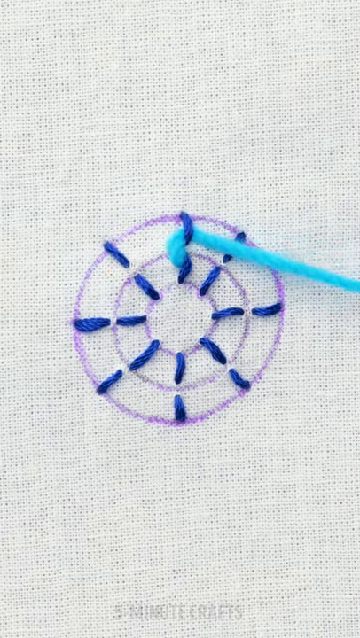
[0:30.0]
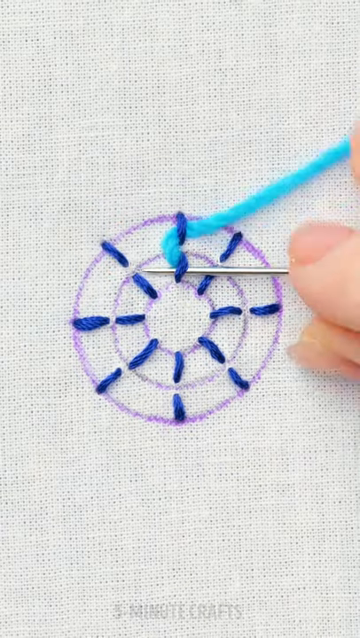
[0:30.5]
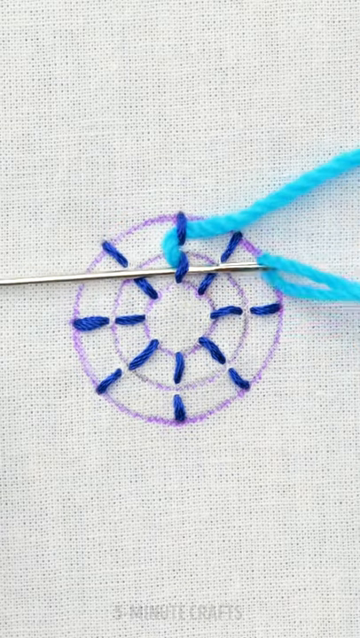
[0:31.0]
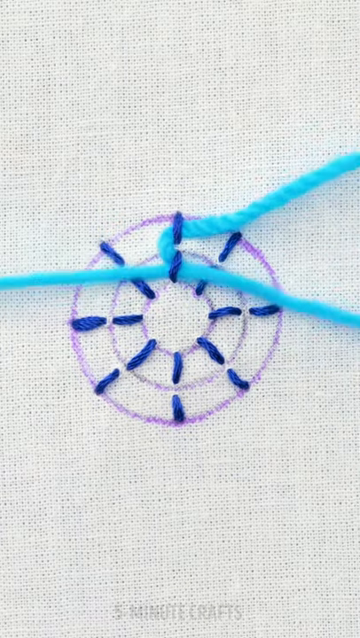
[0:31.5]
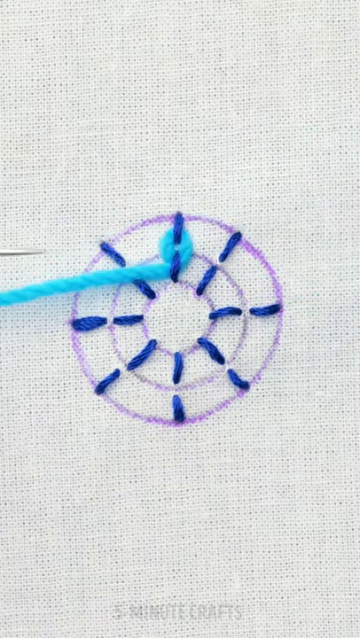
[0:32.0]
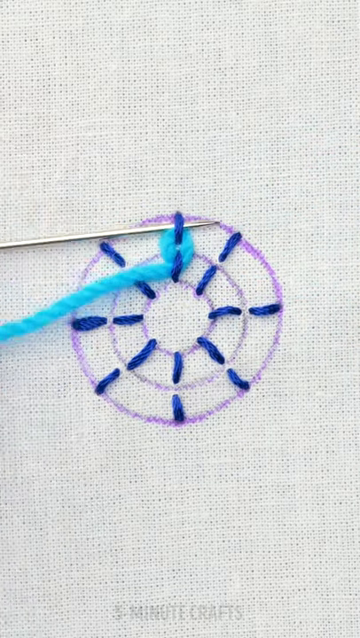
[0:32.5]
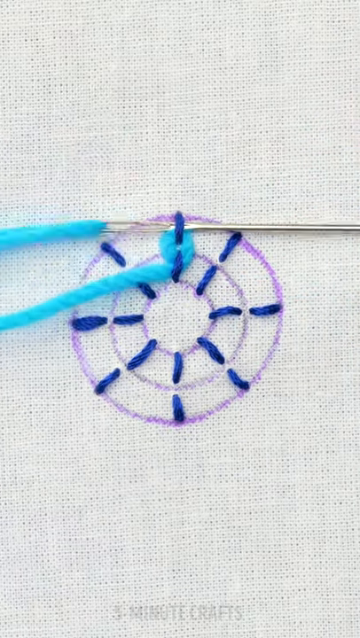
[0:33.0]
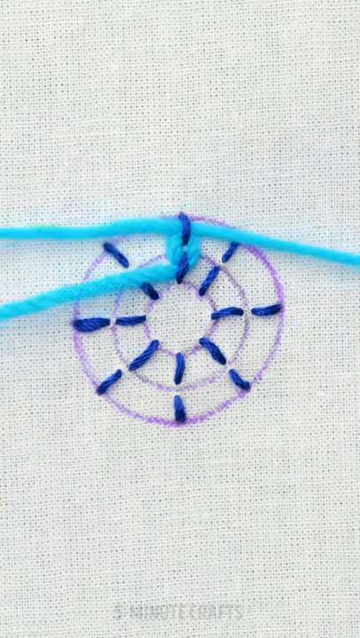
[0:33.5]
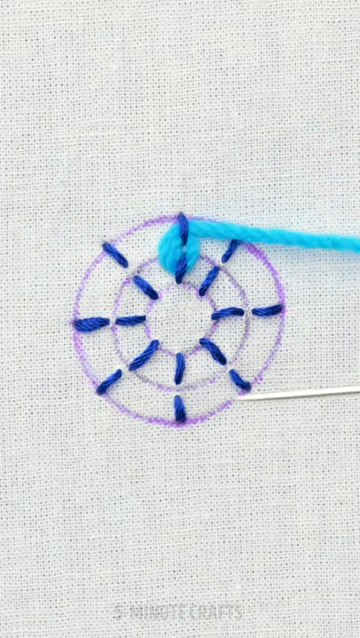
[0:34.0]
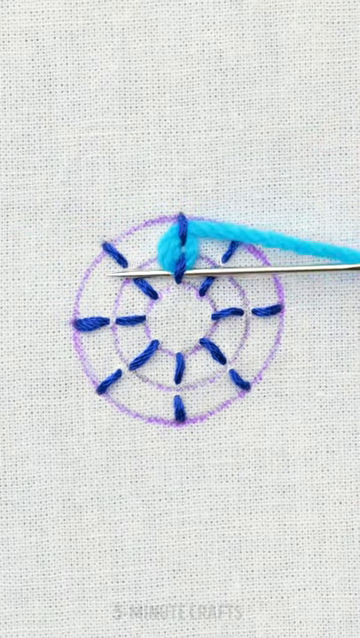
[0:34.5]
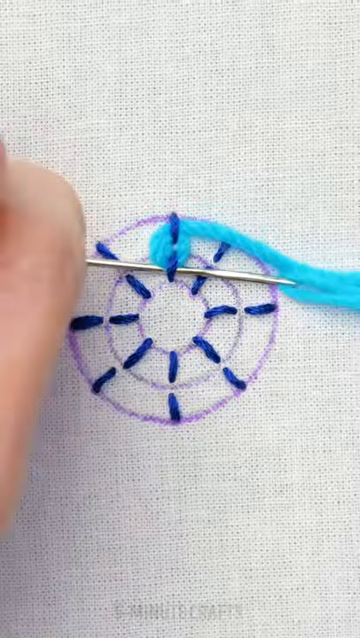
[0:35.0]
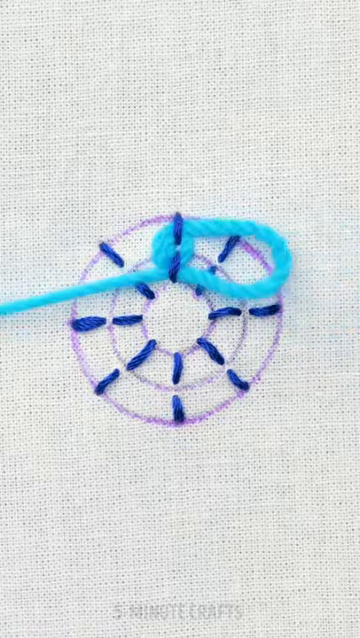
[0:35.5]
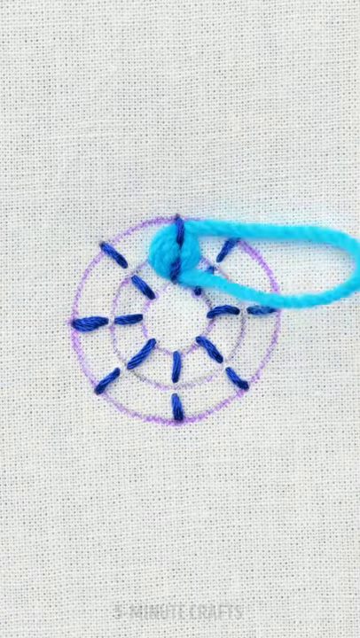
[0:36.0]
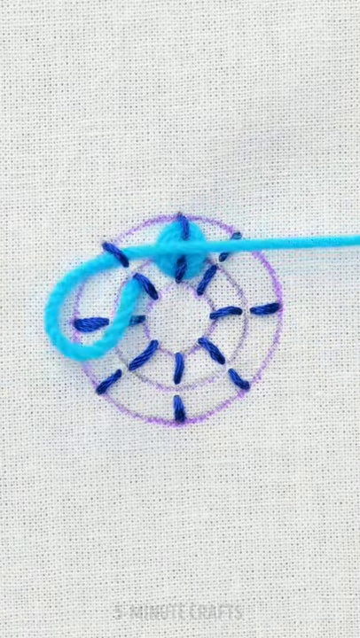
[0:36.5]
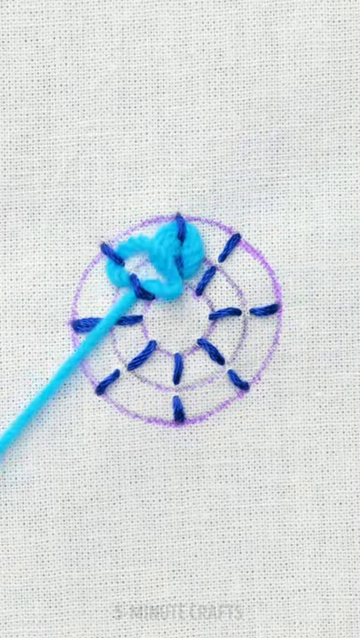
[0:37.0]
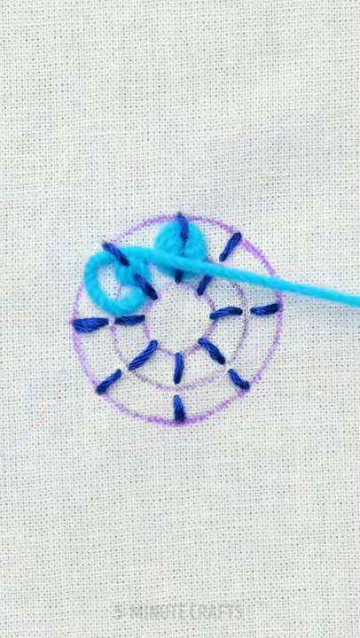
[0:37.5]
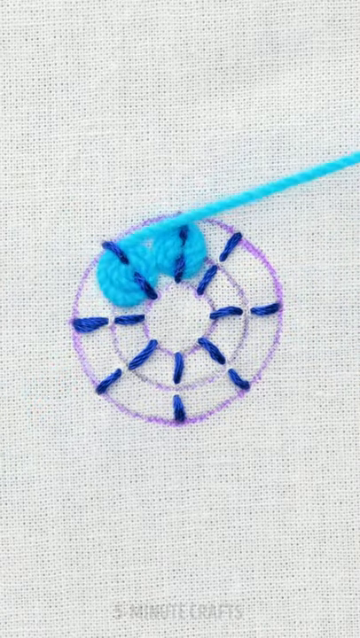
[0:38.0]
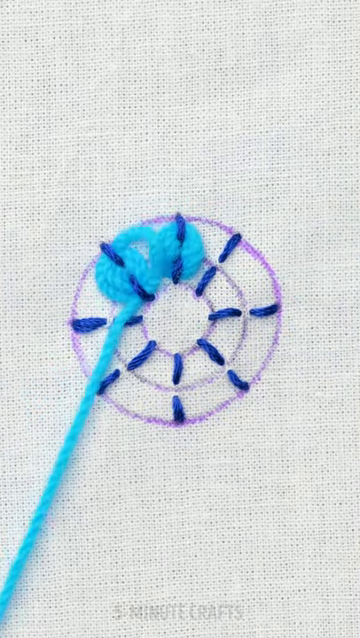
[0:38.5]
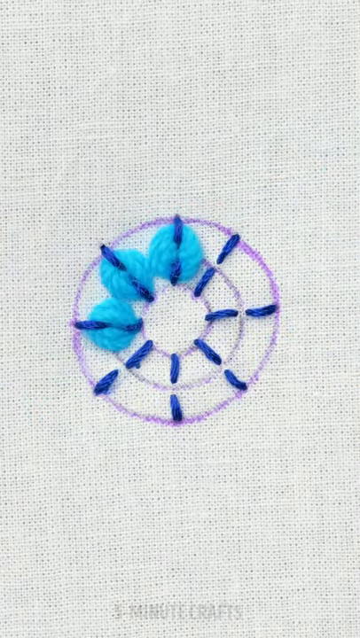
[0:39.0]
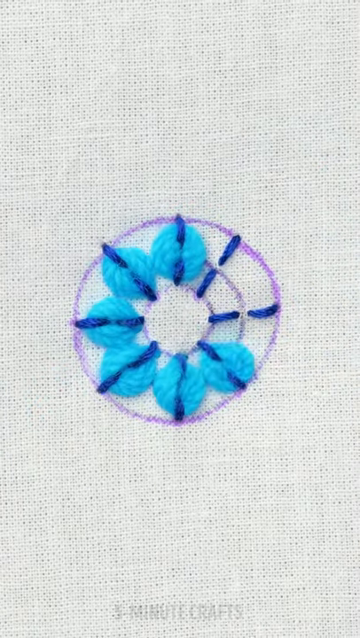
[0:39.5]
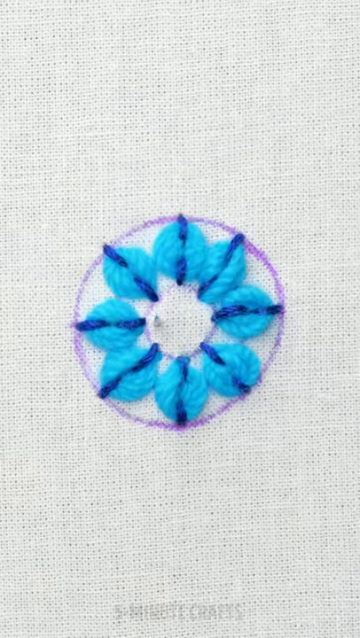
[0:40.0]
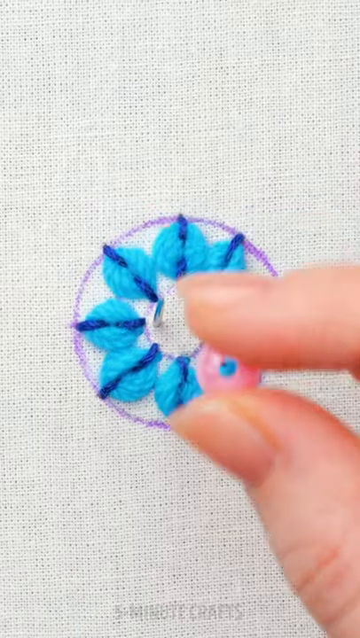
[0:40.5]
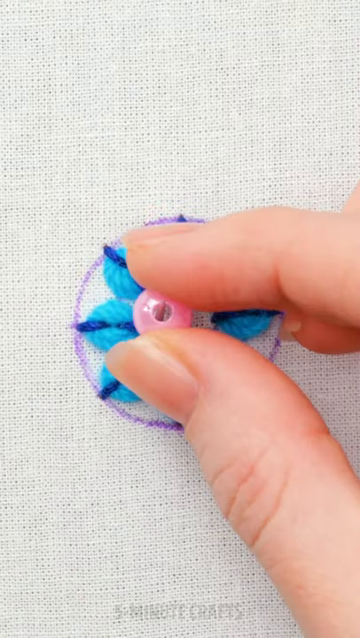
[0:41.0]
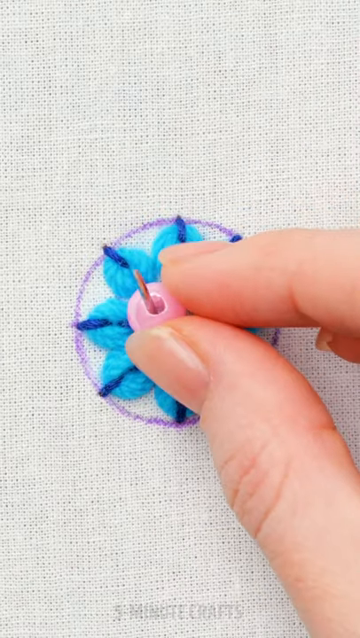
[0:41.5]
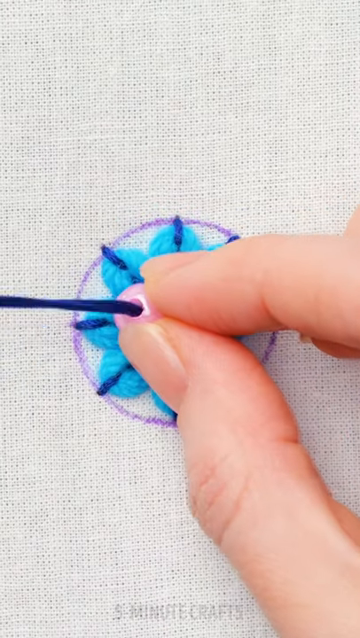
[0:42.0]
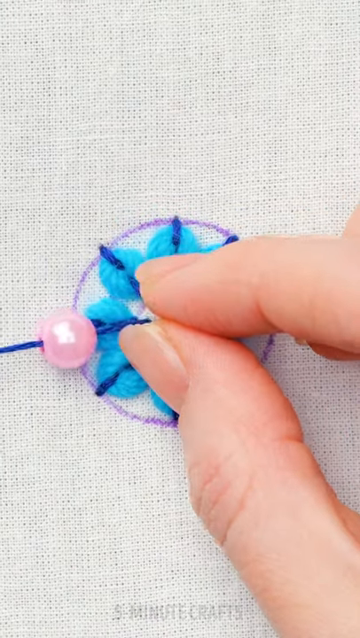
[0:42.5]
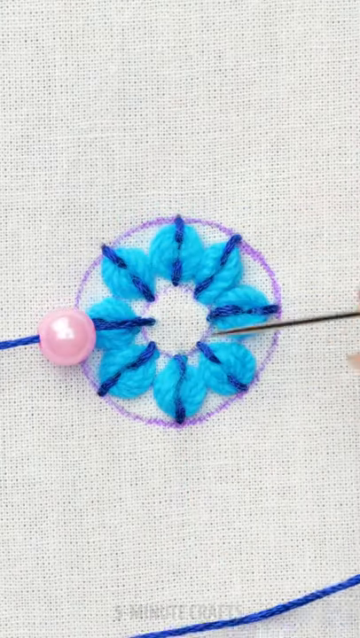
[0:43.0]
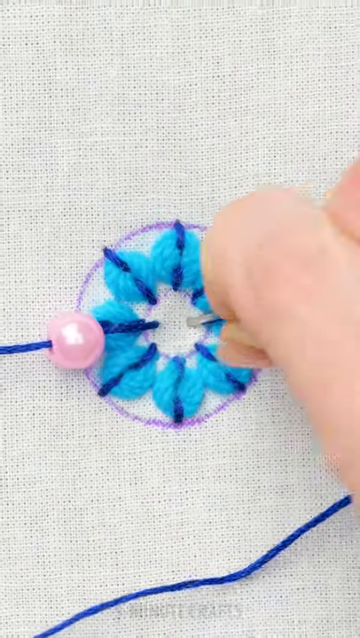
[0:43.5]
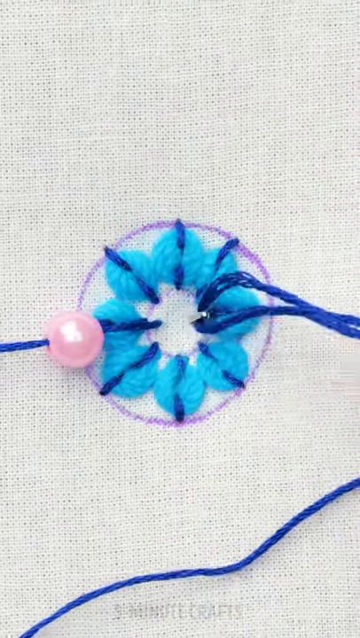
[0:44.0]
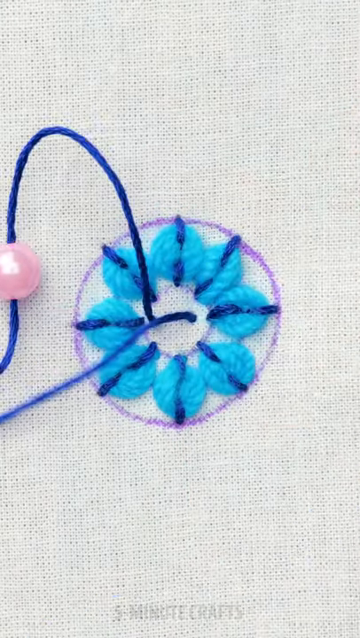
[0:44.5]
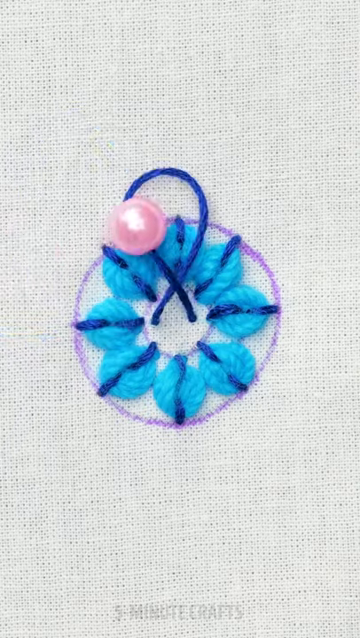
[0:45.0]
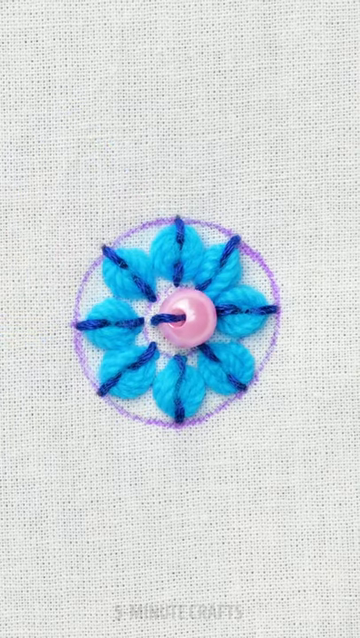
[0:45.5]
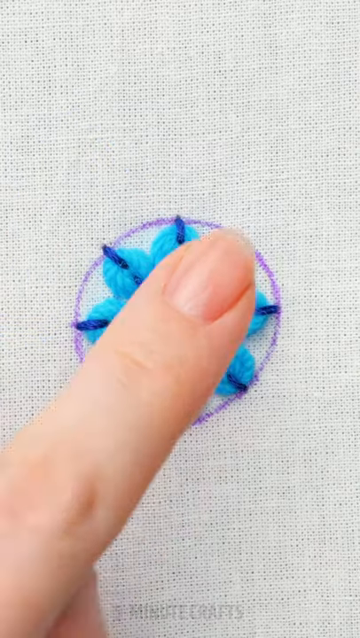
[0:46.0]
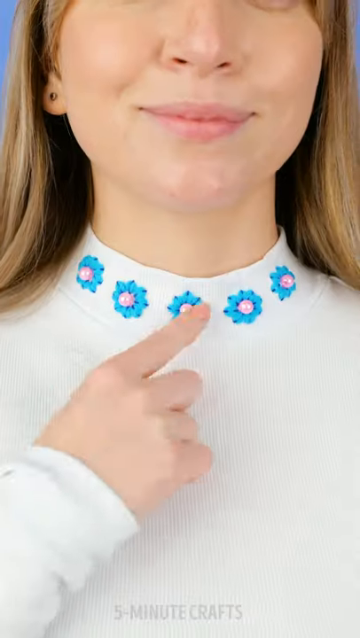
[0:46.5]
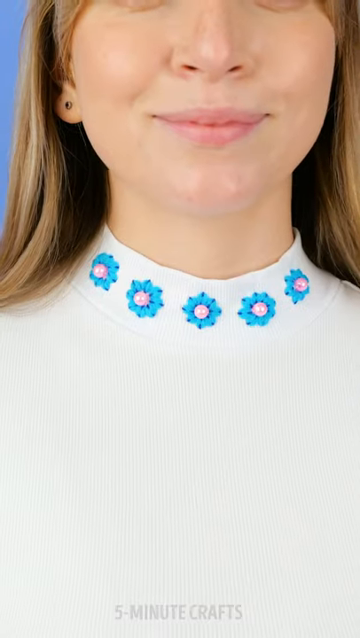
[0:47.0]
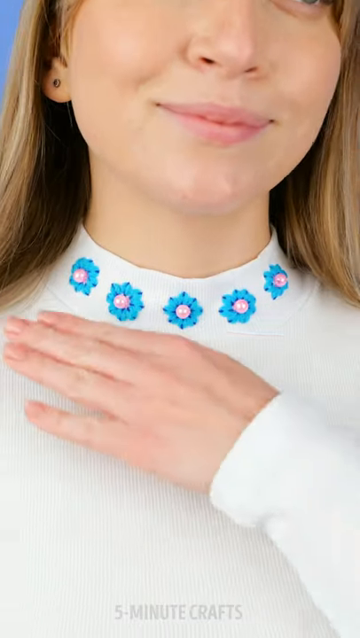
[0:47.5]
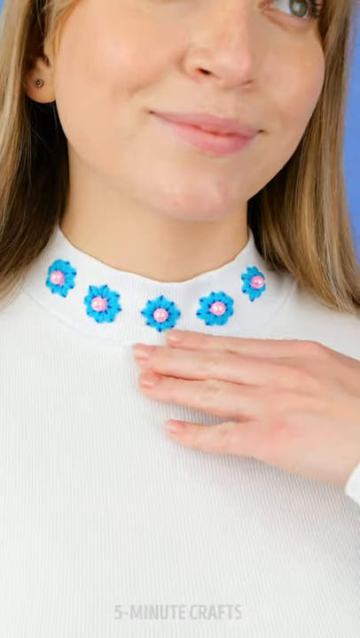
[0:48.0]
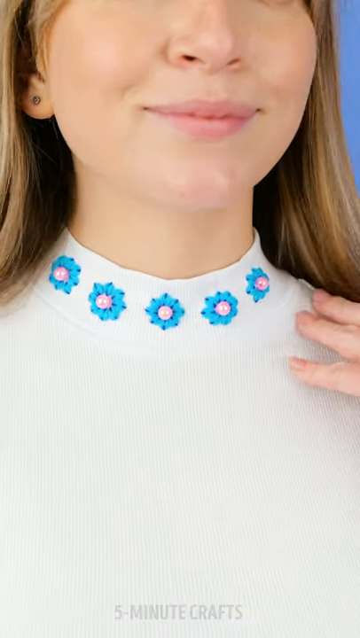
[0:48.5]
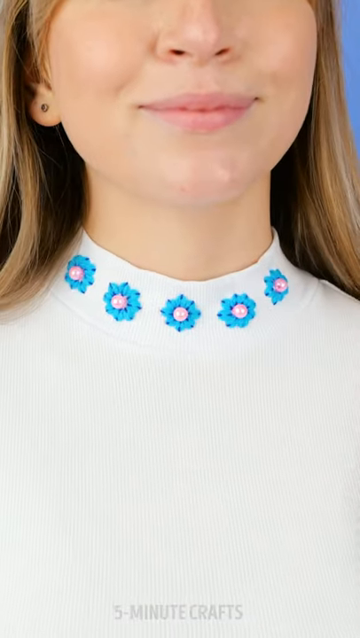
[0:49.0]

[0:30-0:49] The light blue thread is woven in and out of the dark blue thread, making the light blue thread kind of circular around the blue starburst stitches. When finished, the design looks like a small flower, with each pie section looking like a petal. Using the dark blue embroidery thread, they sew a small pink pearl into the center of the design. A woman is then shown wearing a mock turtleneck with five of these little flower-and-pearl designs around the collar in the front, and she kind of runs her hand below the embroidery detailing, showing it off.